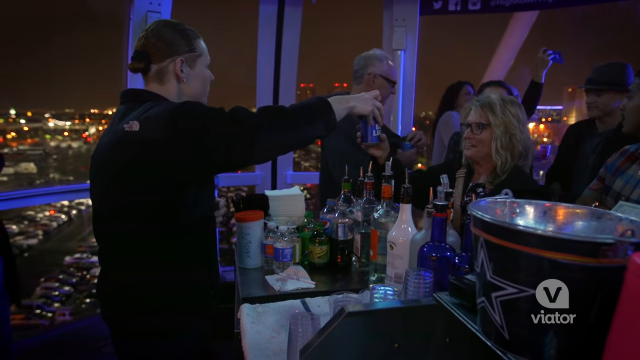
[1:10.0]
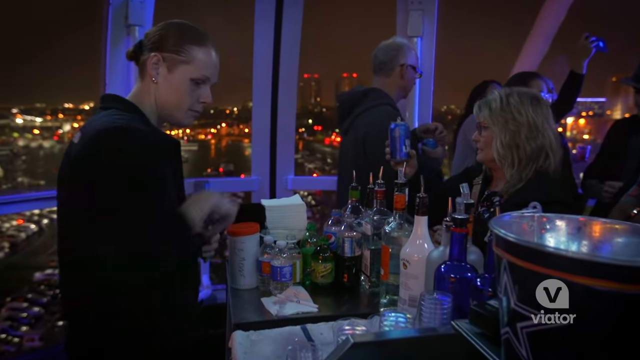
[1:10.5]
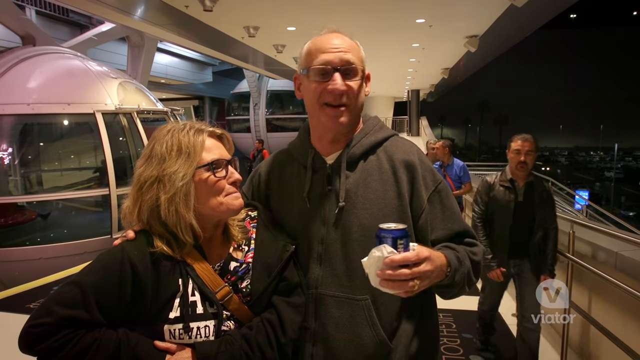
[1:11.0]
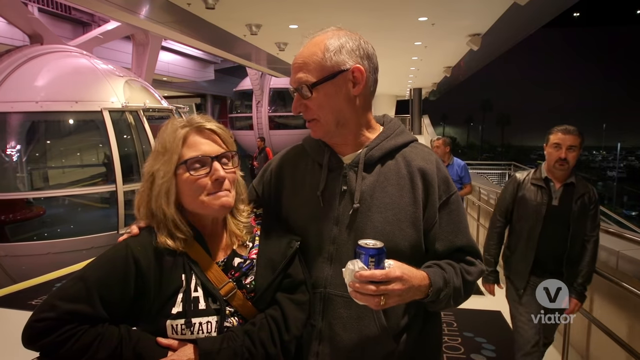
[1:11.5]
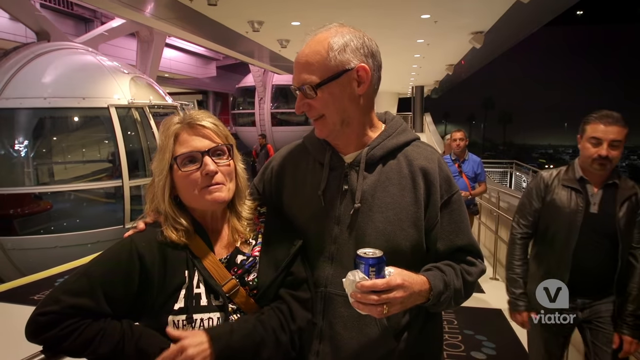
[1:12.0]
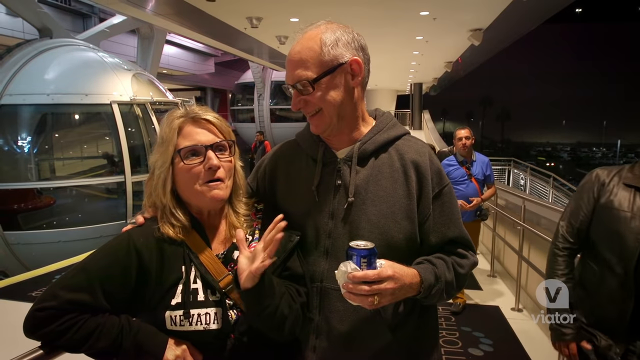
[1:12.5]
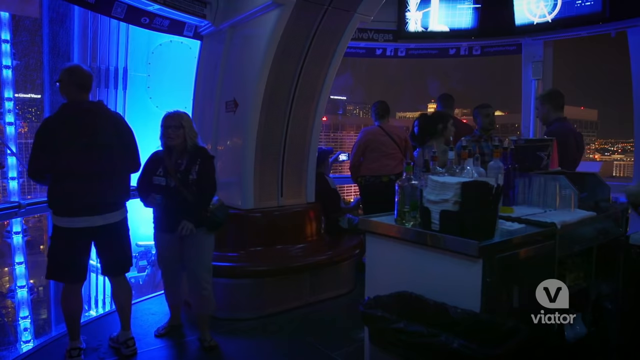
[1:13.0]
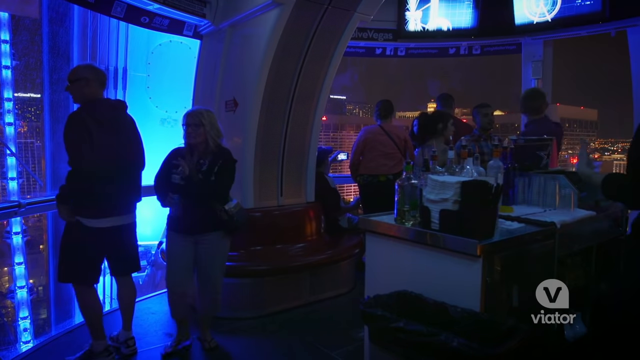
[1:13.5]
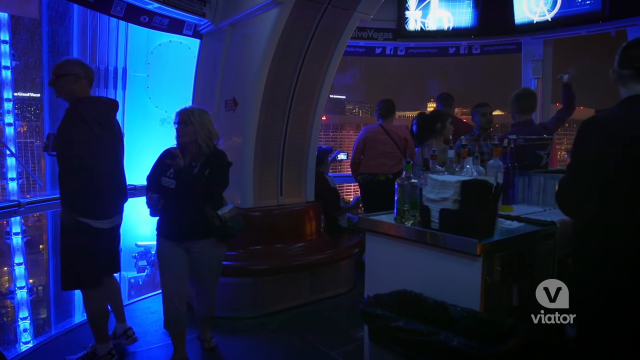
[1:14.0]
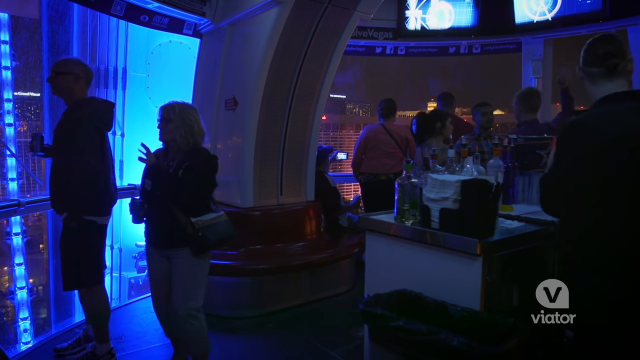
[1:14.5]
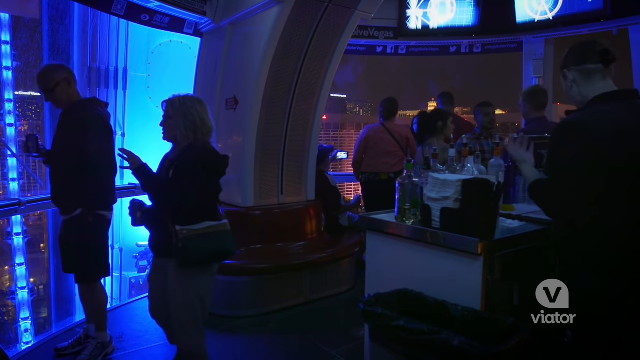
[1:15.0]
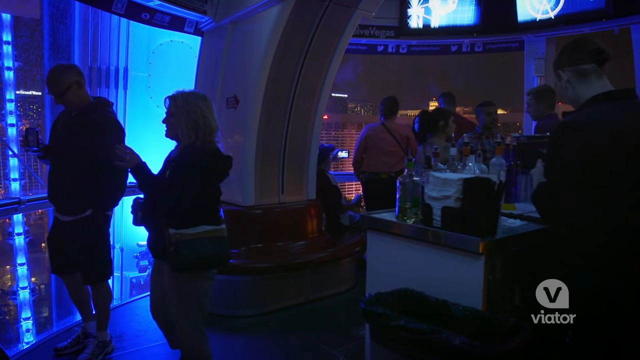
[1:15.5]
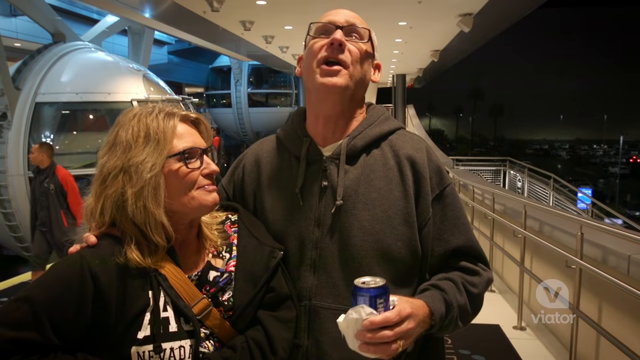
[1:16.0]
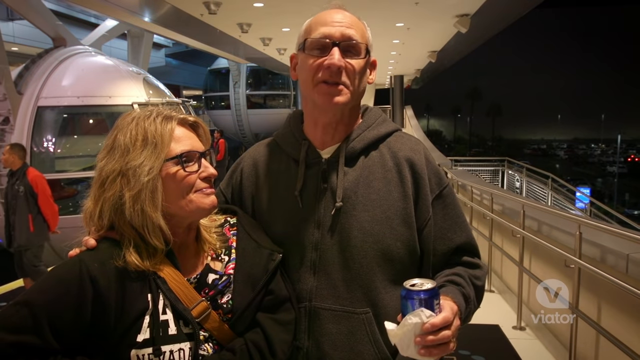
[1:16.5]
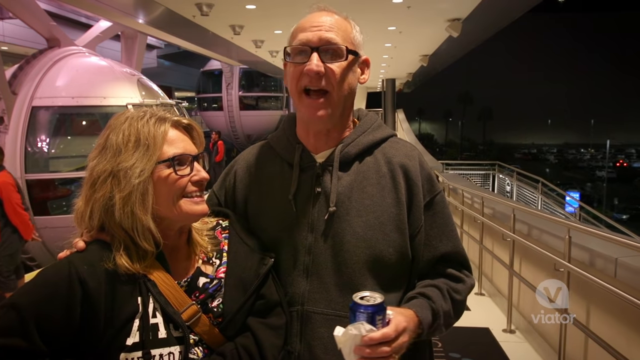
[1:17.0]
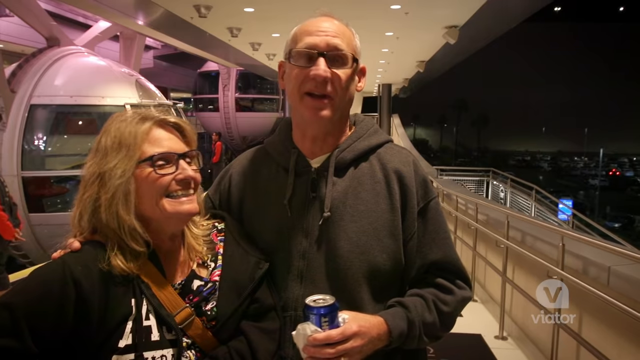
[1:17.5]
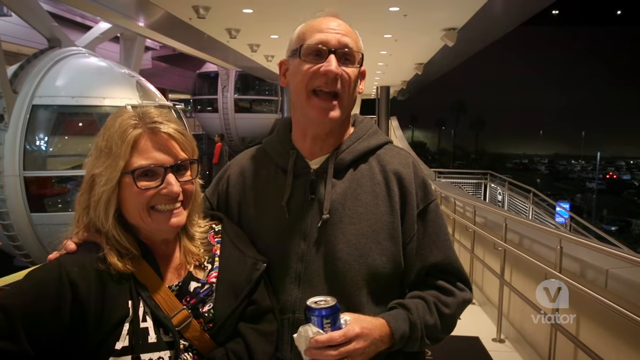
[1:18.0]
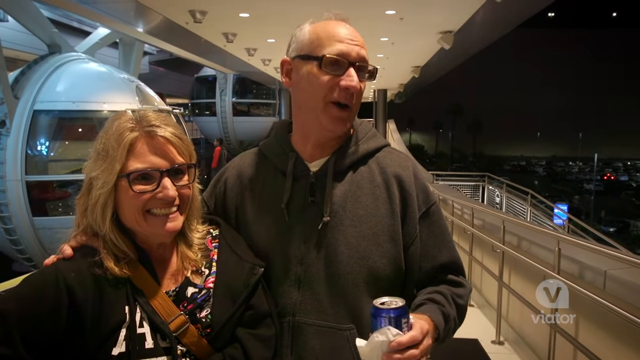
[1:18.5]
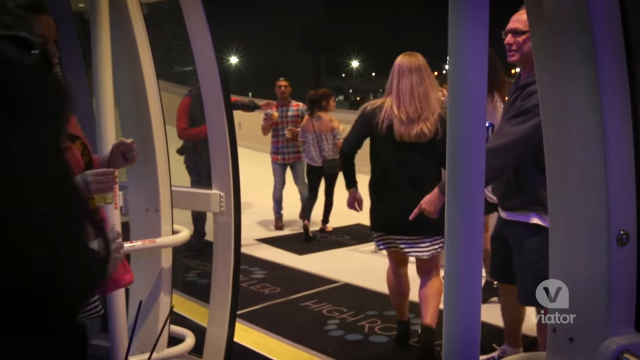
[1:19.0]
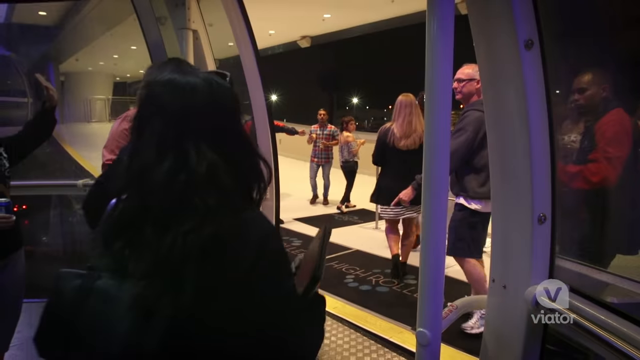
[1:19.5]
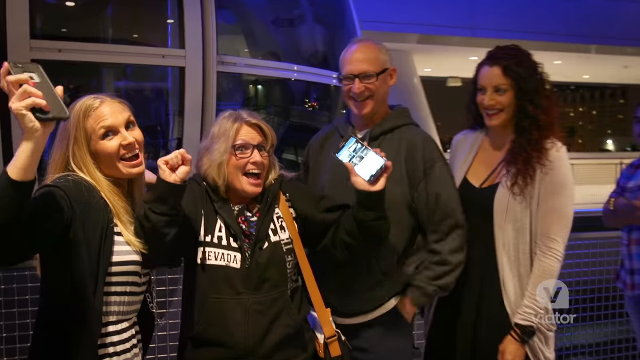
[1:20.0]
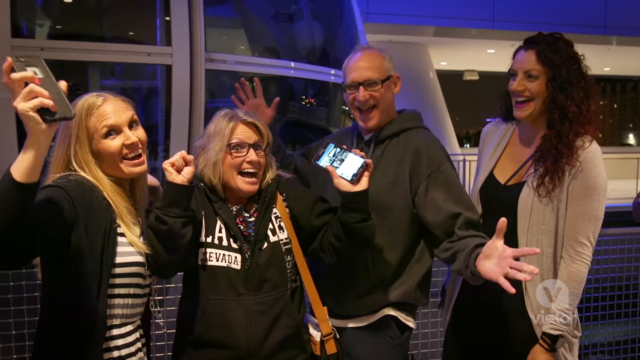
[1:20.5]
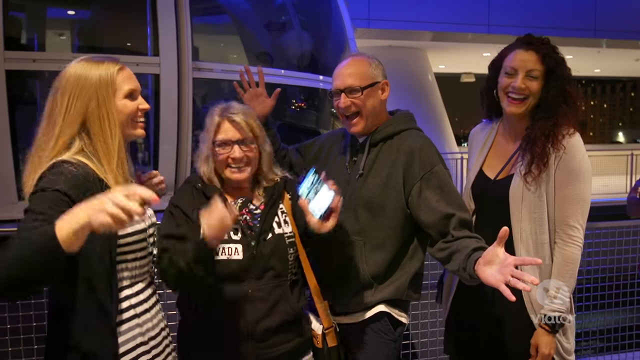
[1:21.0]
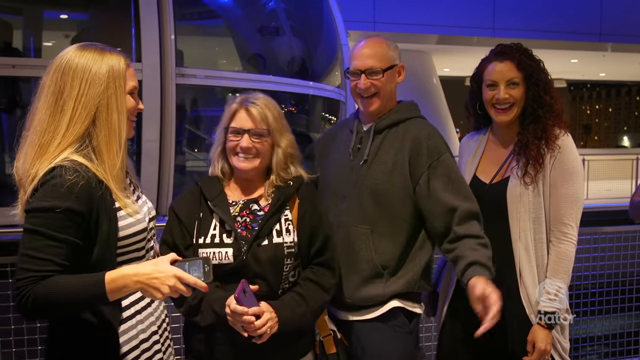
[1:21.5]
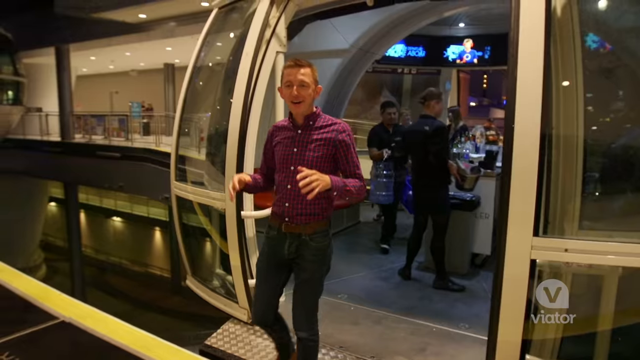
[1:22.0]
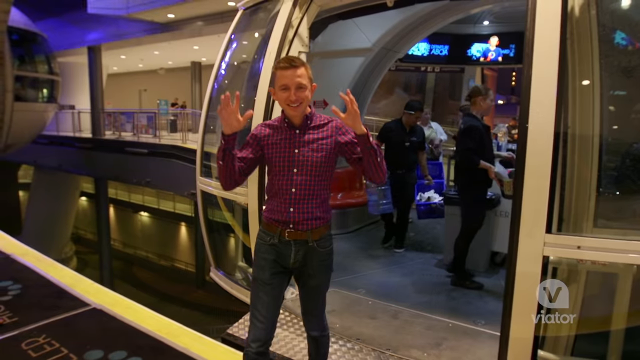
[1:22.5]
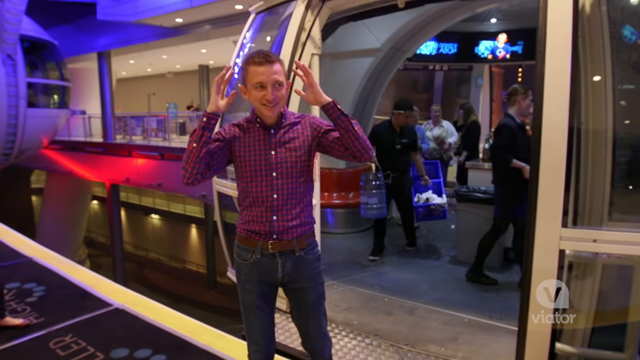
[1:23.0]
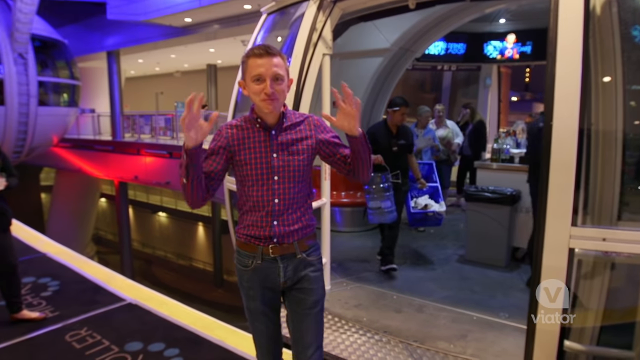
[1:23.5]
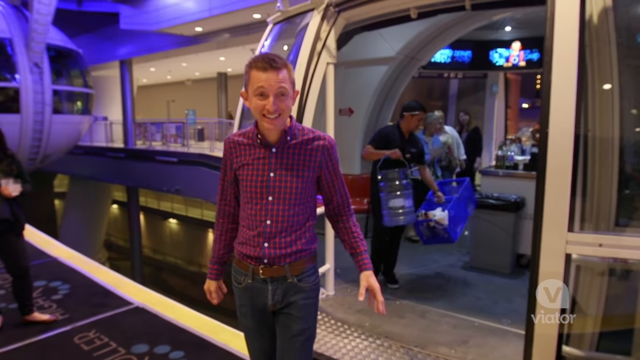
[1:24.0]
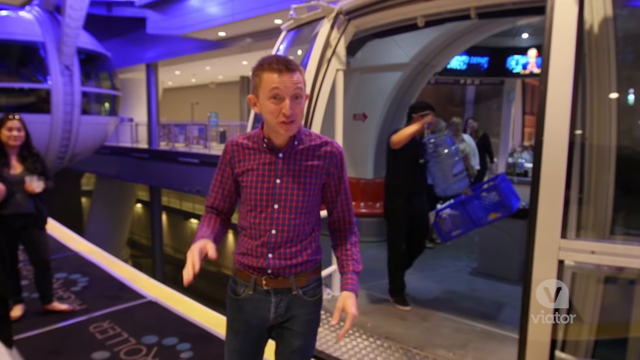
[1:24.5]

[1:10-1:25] The bartender gives someone a drink. A middle-aged man and woman are both smiling; the man holds something like a beer in his left hand. They seem to be standing in front of some of the orbs, which might be a ride going above the city, at the spot where people would line up to get in. Interspersed is another scene of various people seemingly getting off one of the orb rides while others are perhaps looking to get on. The same older couple then appears in the center with a couple of ladies on either side of them; they seem to be taking photographs and are perhaps getting ready to go on the ride. One of the women wears a black shirt that says "Las Vegas, Nevada," suggesting they are probably in Las Vegas. The man is shown again, wearing jeans and a black and red shirt, in what seems to be an industrial area indoors, with one of the orb rides visible behind him to the left.